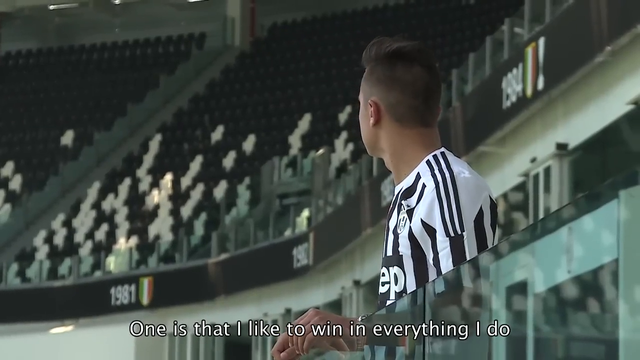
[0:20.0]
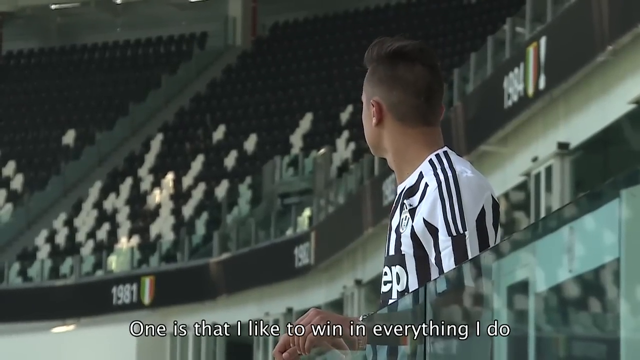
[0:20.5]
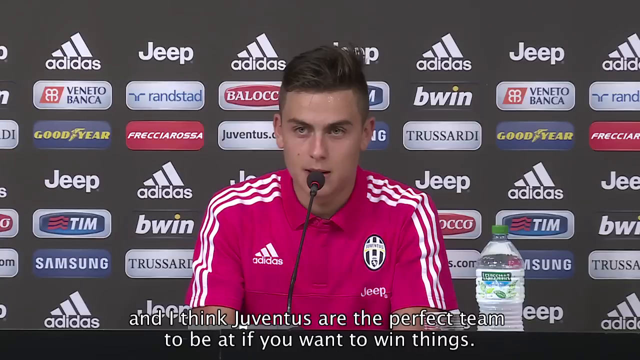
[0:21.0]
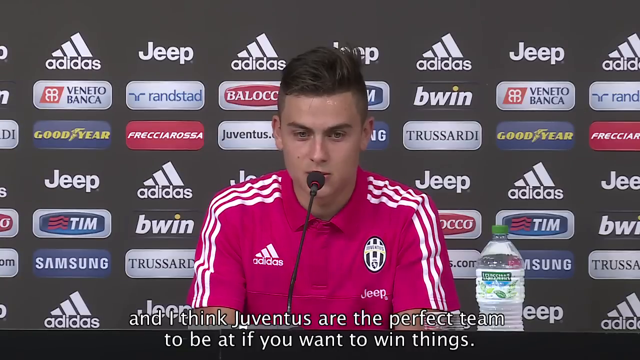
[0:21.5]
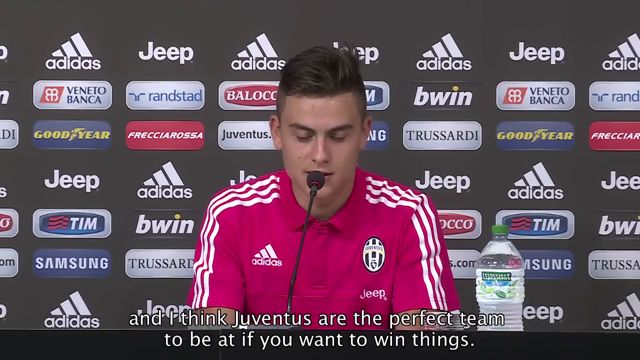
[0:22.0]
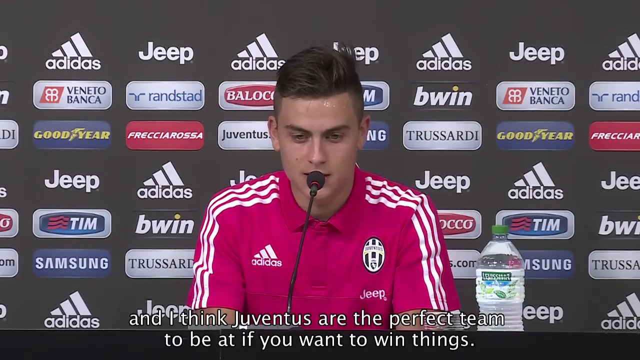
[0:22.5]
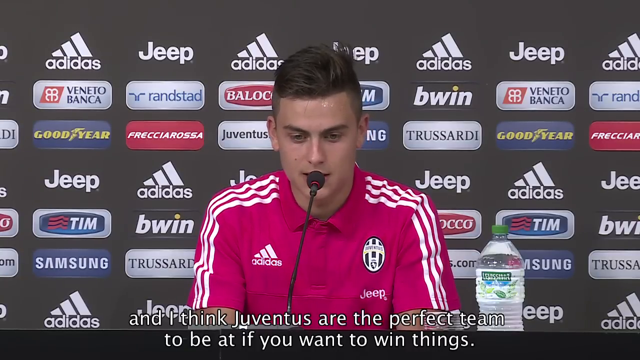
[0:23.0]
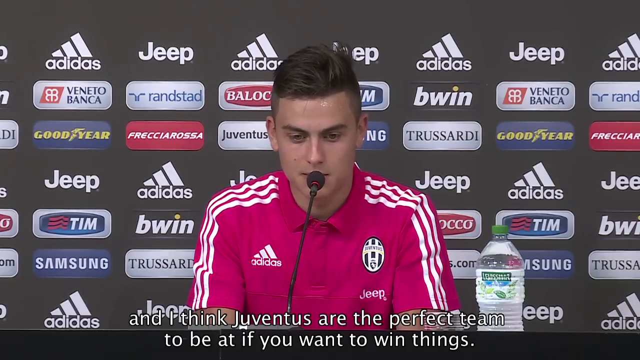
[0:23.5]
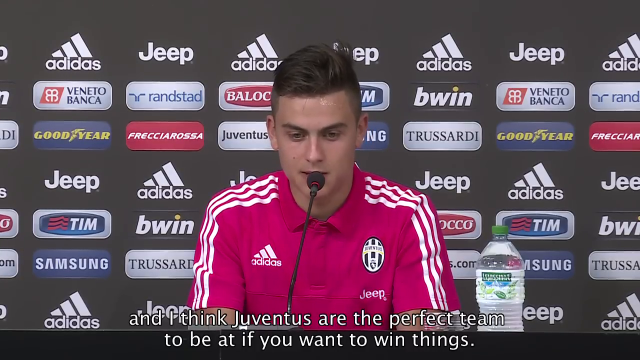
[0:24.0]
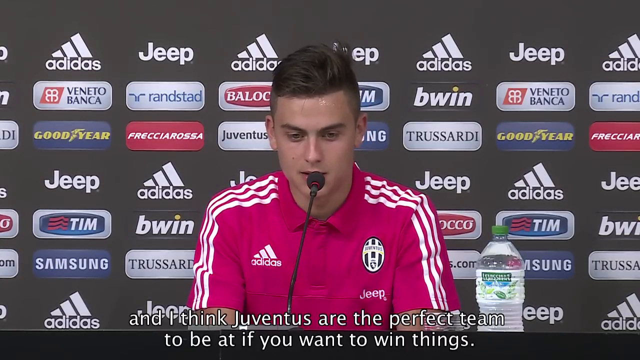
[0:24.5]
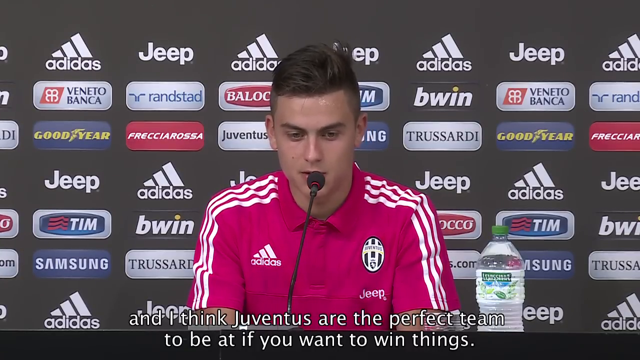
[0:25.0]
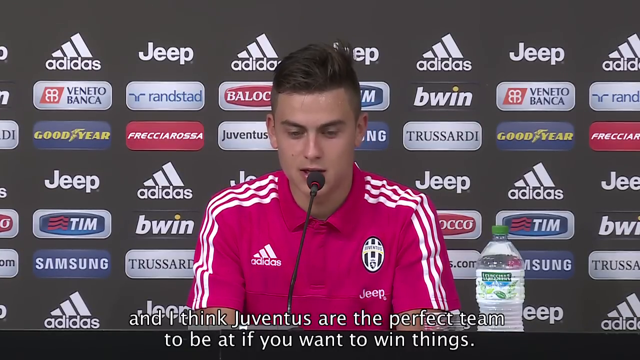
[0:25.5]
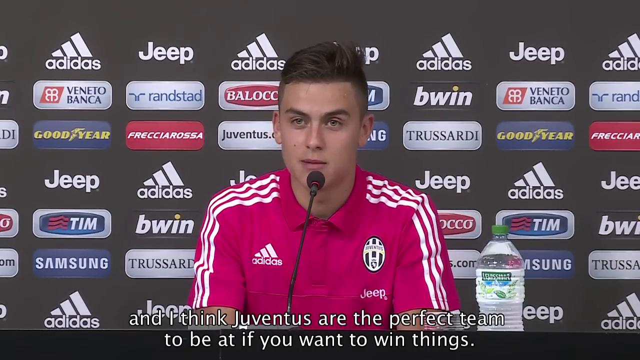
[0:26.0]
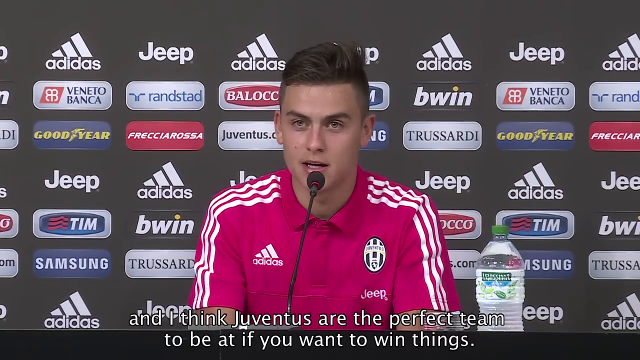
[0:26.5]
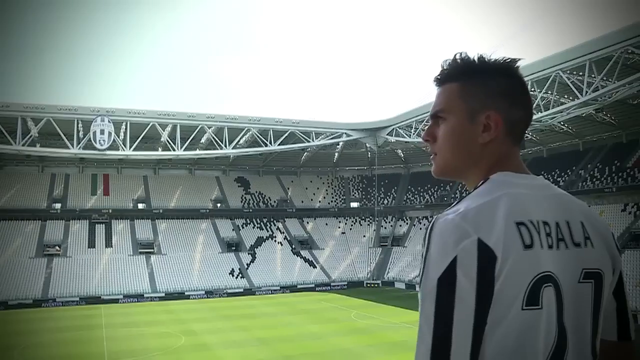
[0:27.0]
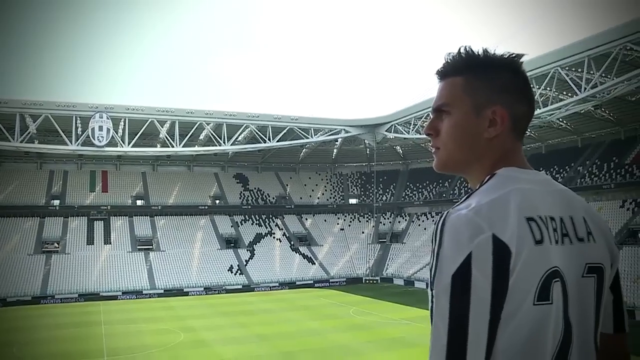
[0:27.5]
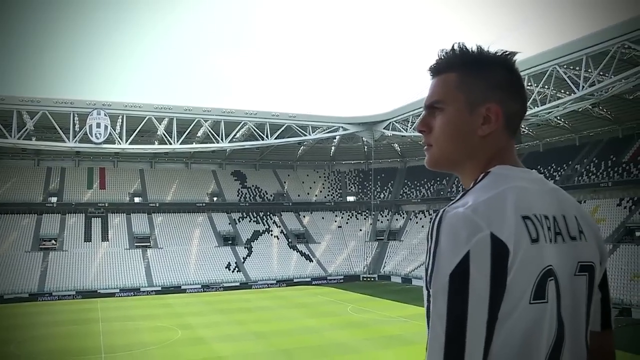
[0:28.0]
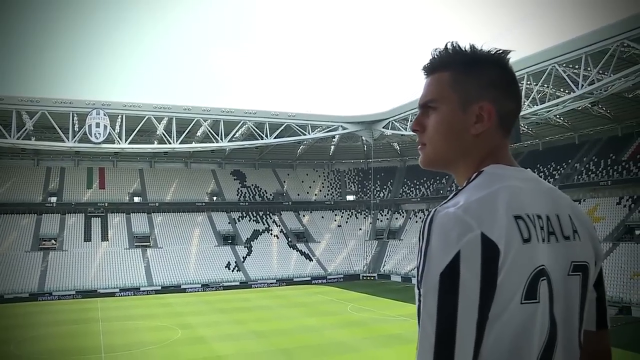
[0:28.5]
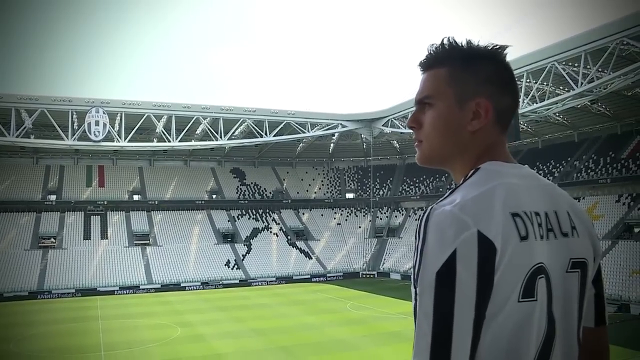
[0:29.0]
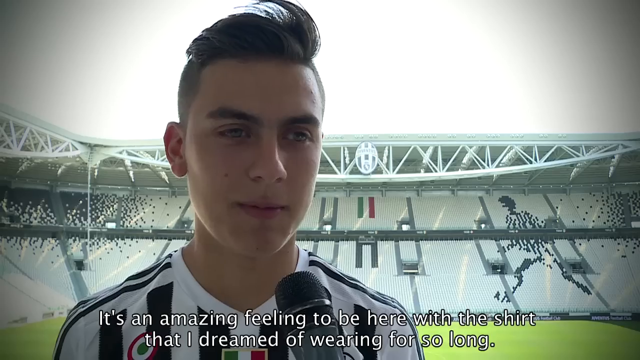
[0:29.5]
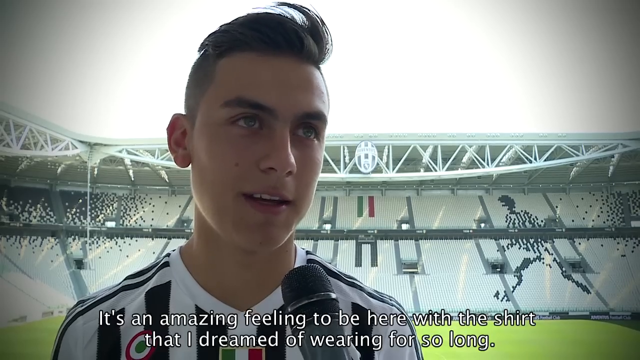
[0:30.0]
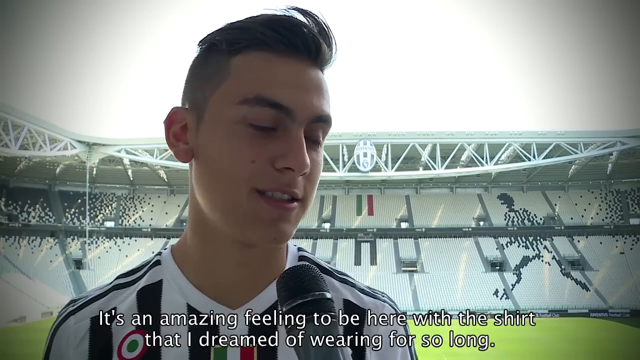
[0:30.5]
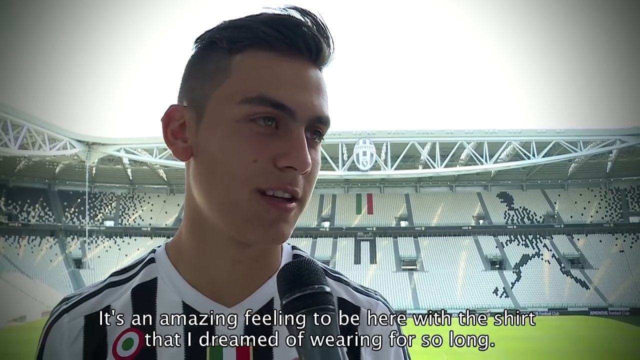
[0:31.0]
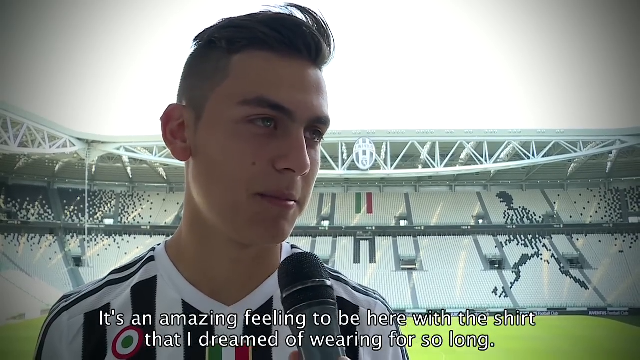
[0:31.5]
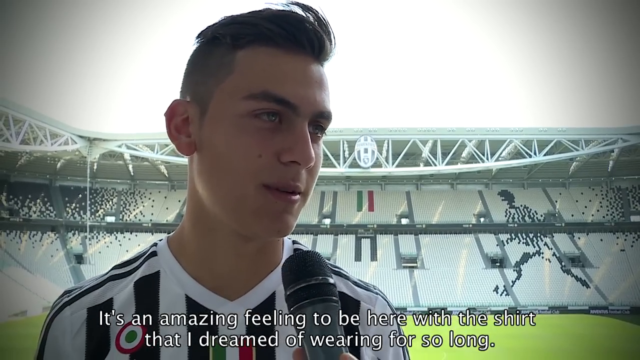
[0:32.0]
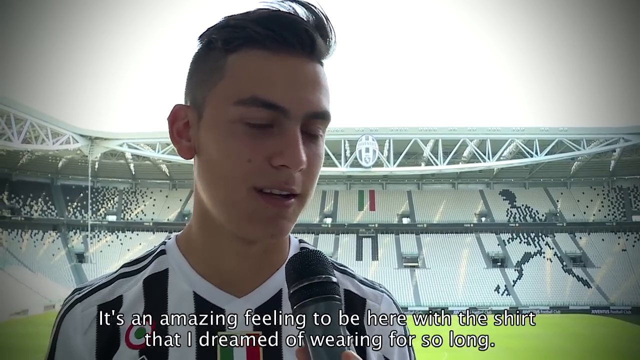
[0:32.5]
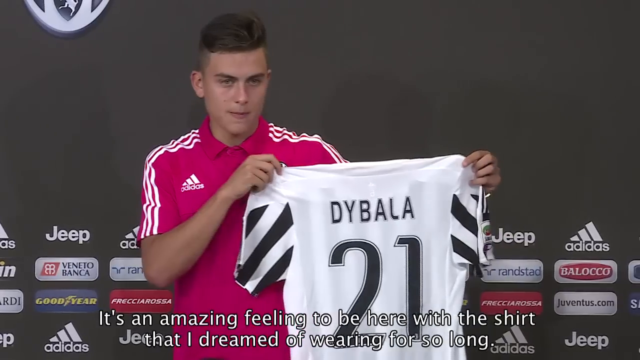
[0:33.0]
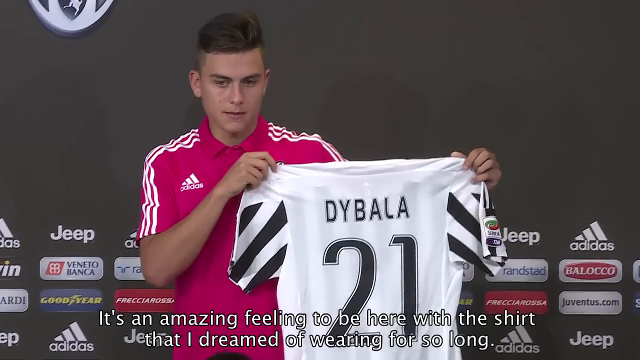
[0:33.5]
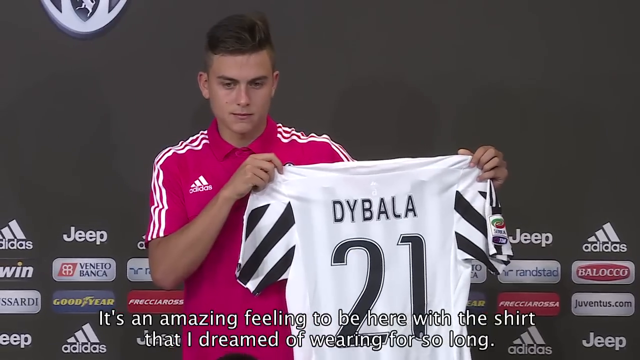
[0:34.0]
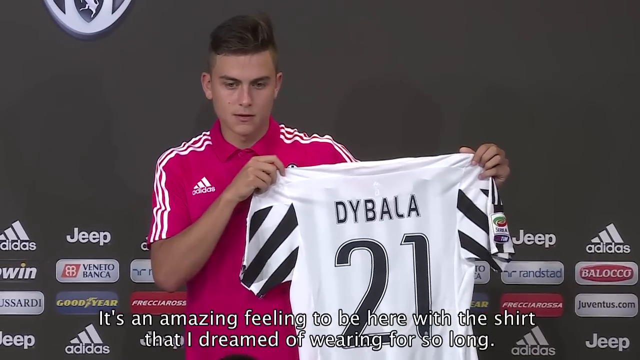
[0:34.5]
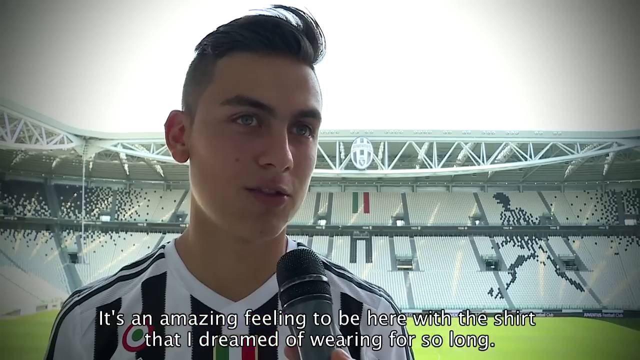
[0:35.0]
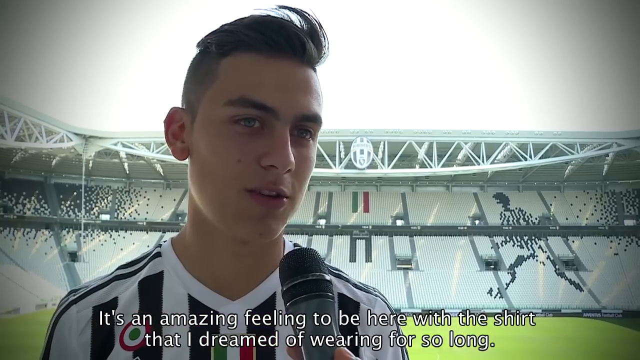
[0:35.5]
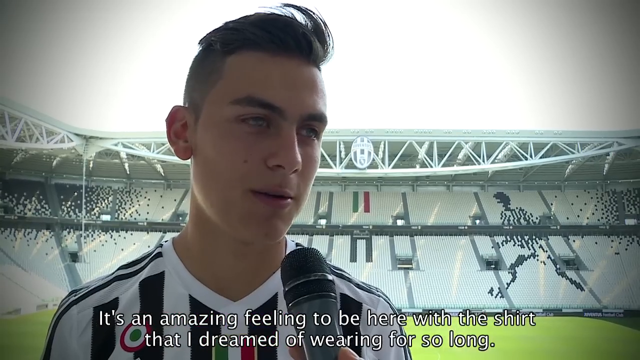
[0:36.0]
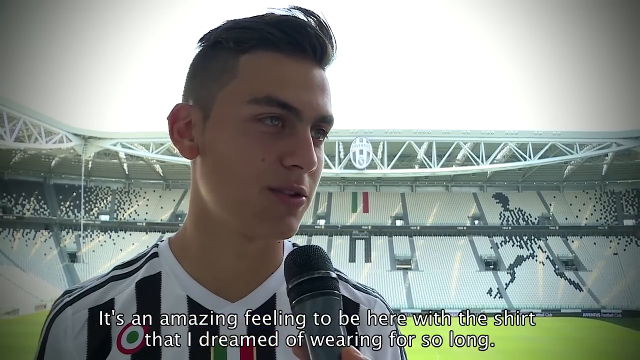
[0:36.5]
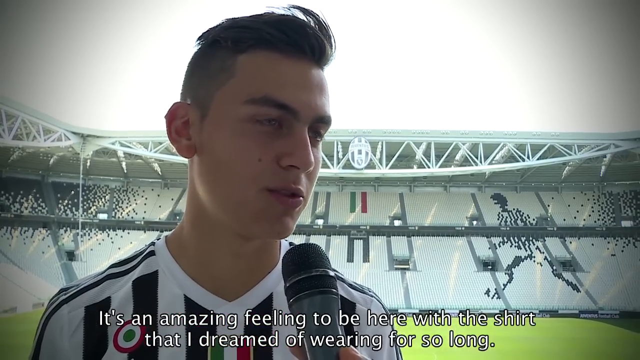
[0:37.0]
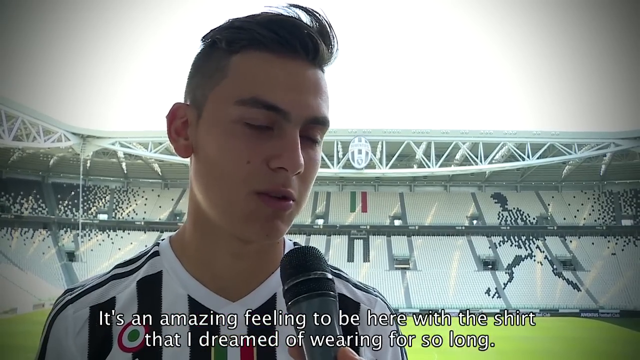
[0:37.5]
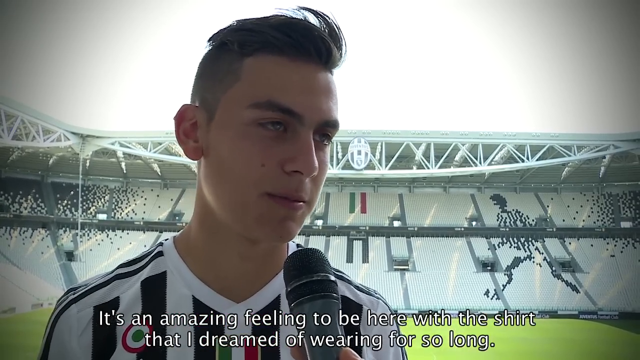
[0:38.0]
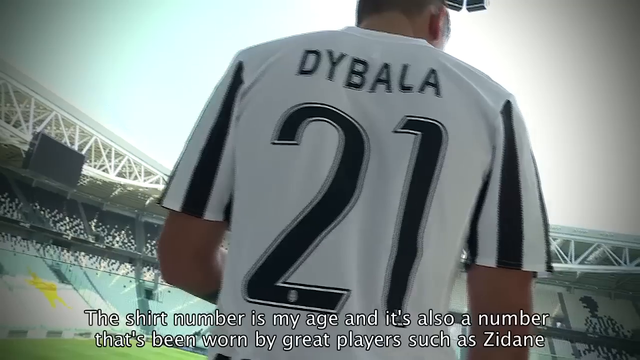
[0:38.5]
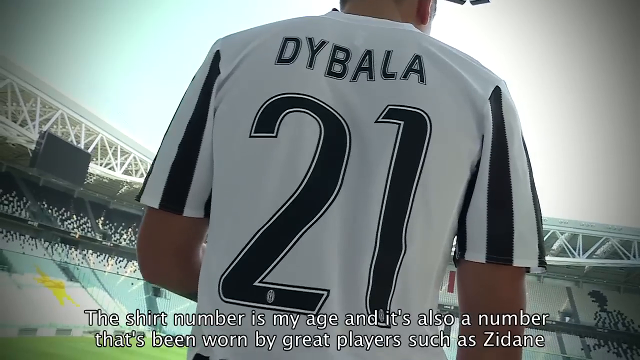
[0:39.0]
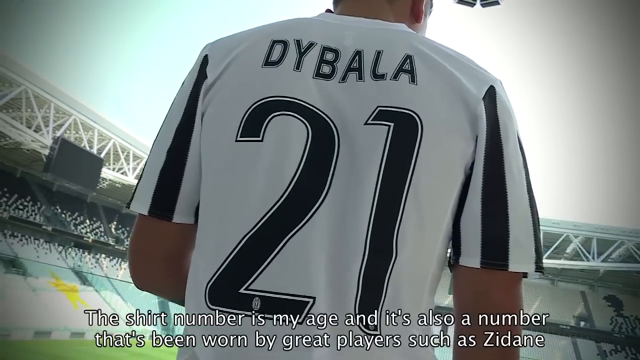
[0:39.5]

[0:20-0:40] The interview continues, with a thin microphone in front of him. He looks very calm and stares toward the interviewers and/or audience members, appearing to smile and smirk from time to time. He wears a hot pink Adidas Juventus club polo shirt with three white stripes running across his shoulders from left to right. As he talks, he begins to look around. A speck of sweat at the top left side of his forehead glistens as it reflects the light. He appears to have a calm, poised posture. He is then shown with an empty Juventus stadium, its seats primarily white with some black, and the Italian flag displayed in the center of the stadium.